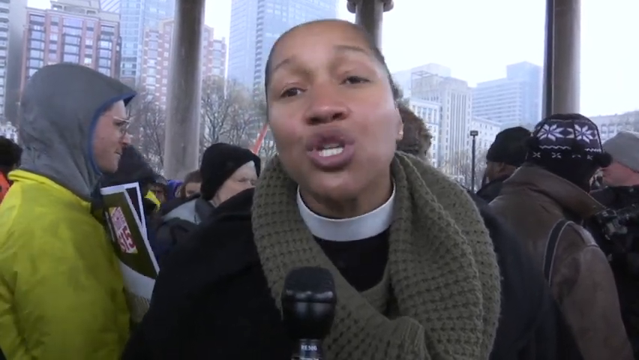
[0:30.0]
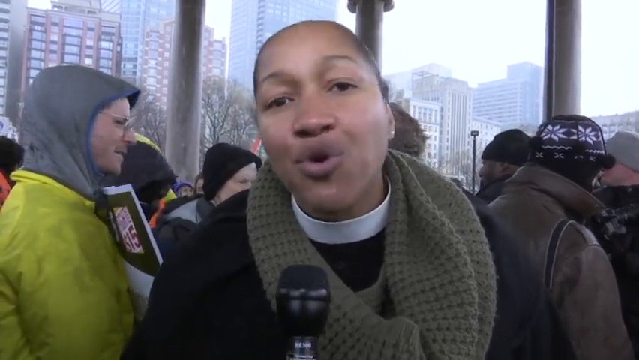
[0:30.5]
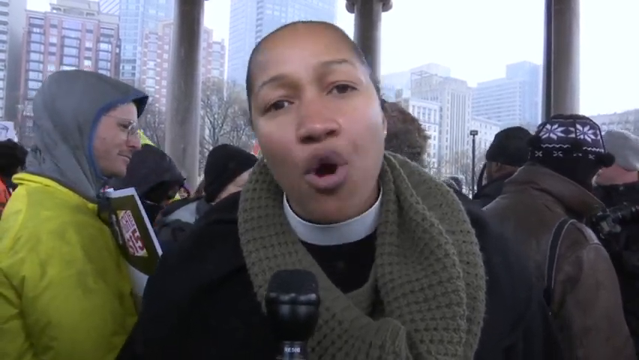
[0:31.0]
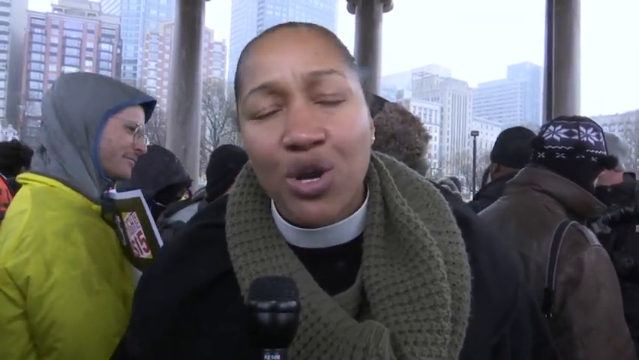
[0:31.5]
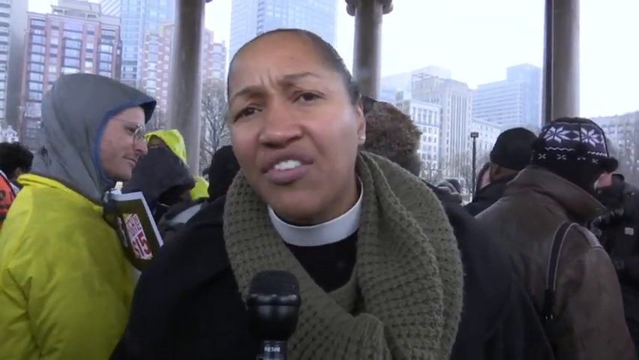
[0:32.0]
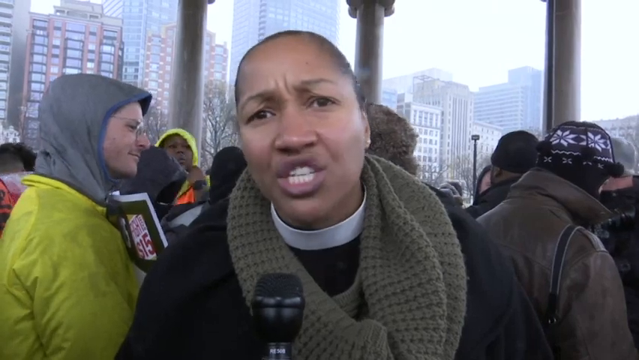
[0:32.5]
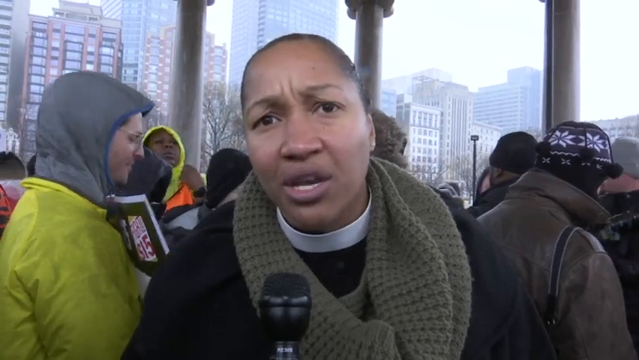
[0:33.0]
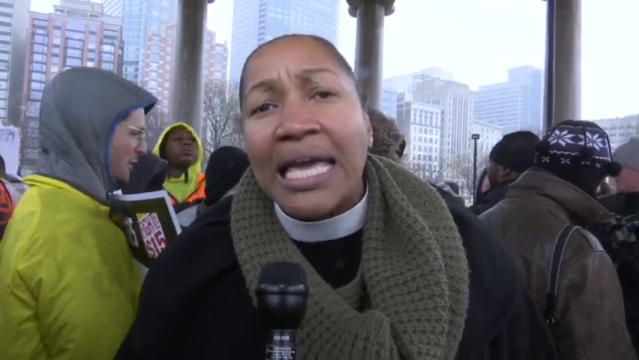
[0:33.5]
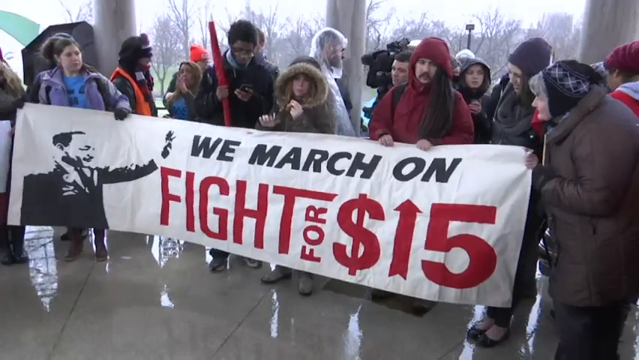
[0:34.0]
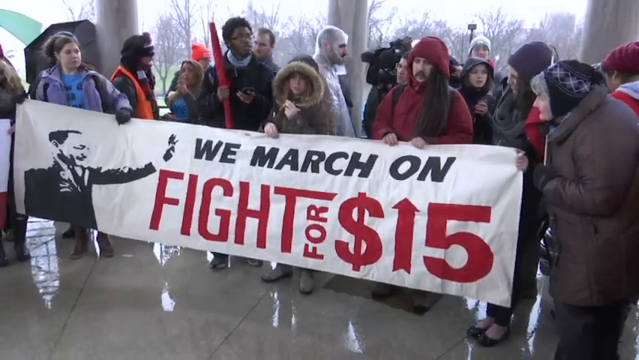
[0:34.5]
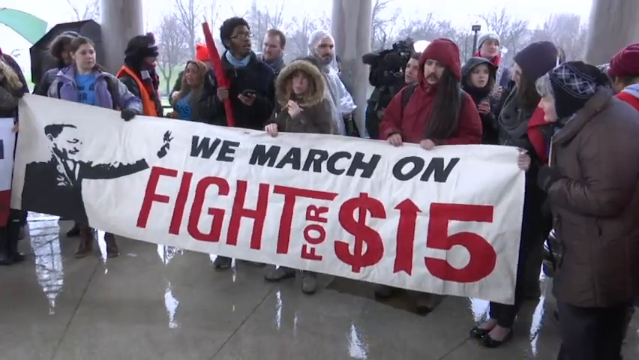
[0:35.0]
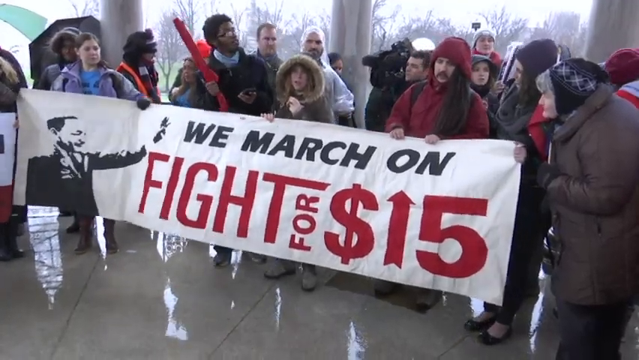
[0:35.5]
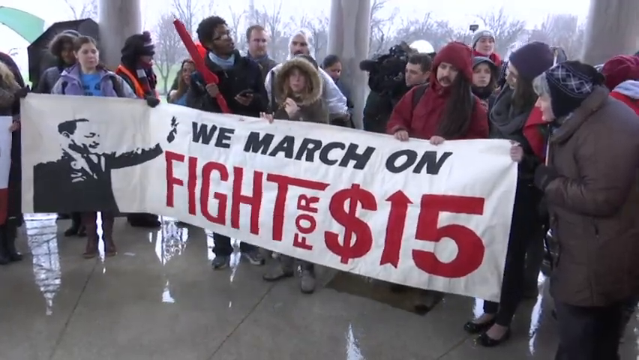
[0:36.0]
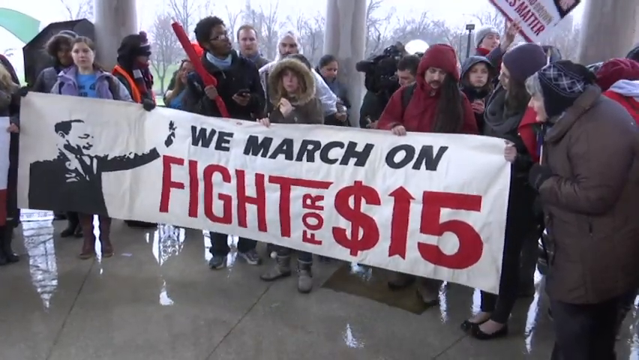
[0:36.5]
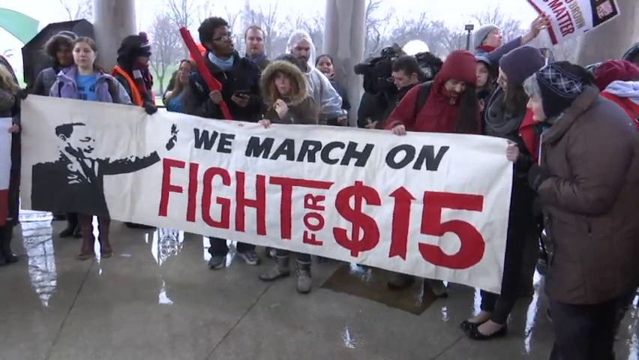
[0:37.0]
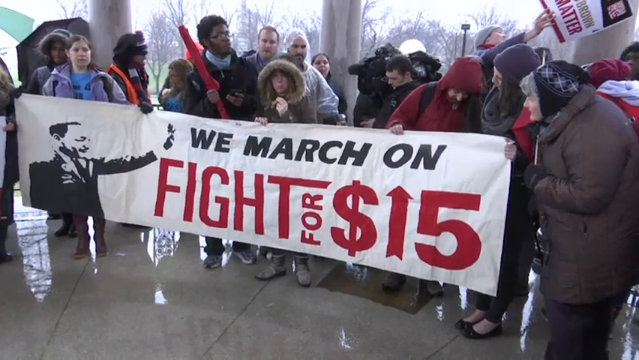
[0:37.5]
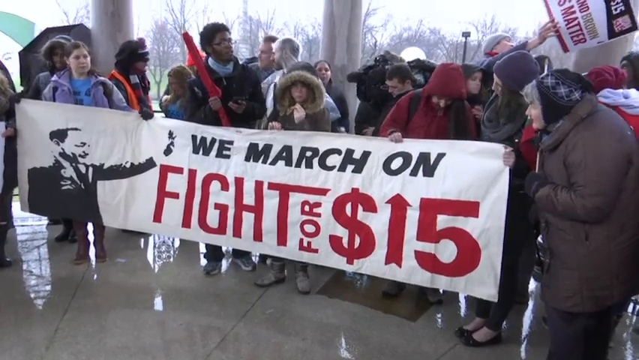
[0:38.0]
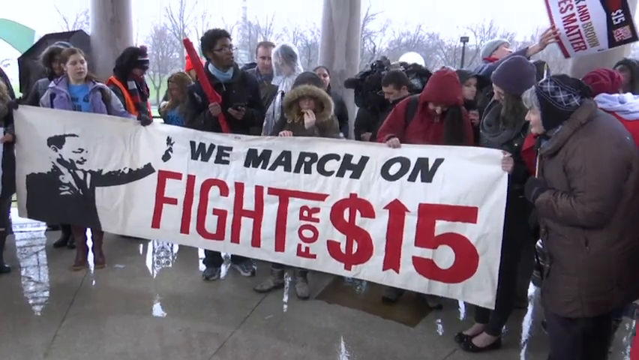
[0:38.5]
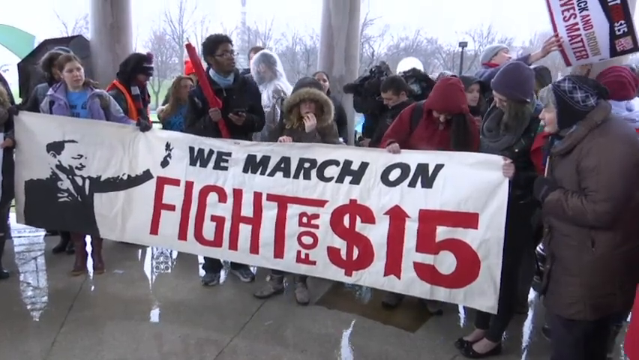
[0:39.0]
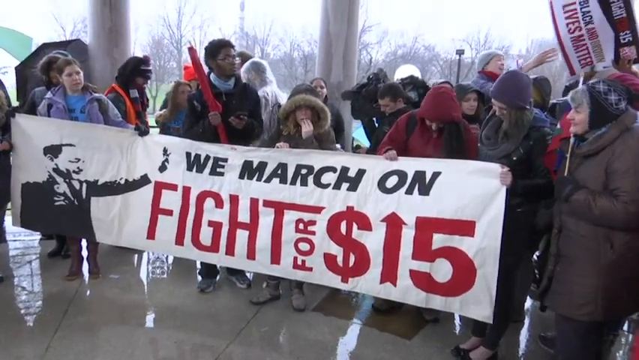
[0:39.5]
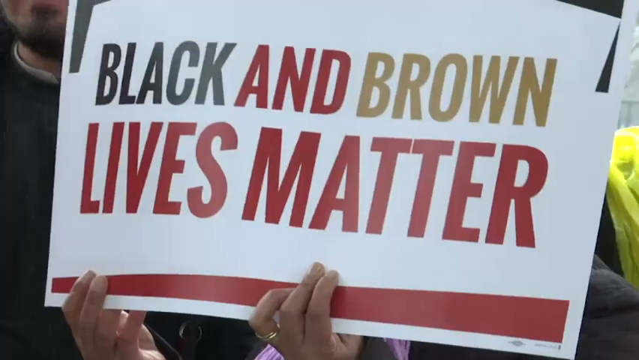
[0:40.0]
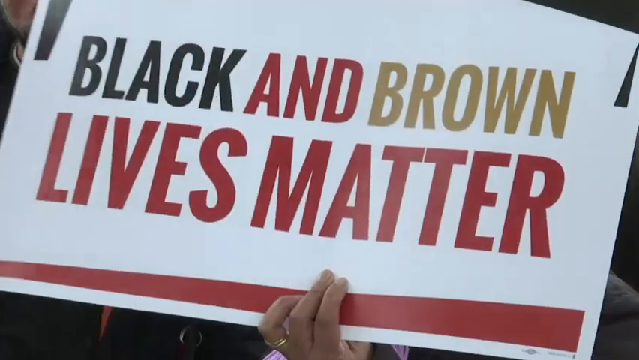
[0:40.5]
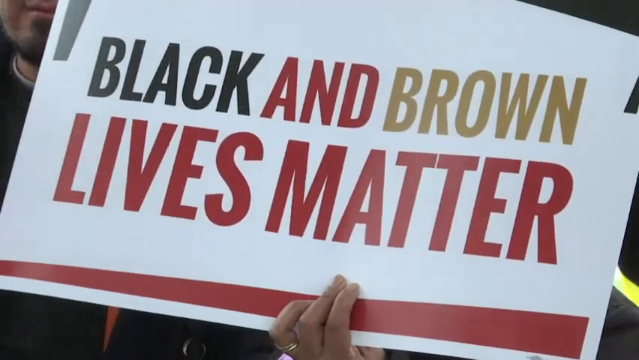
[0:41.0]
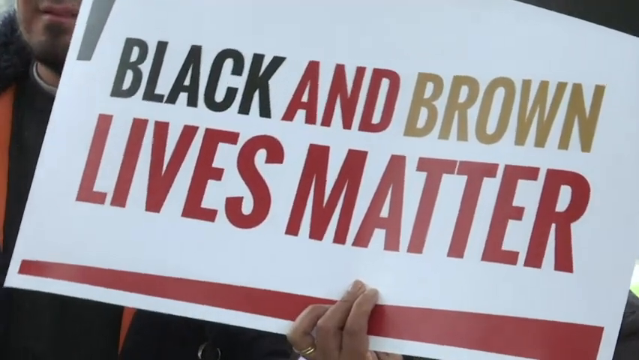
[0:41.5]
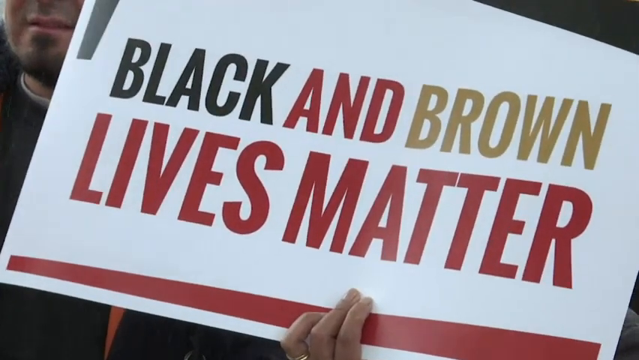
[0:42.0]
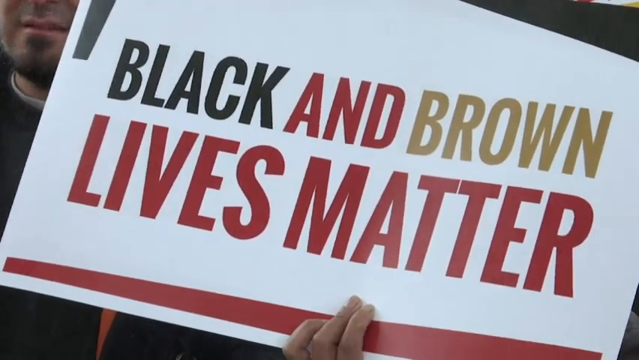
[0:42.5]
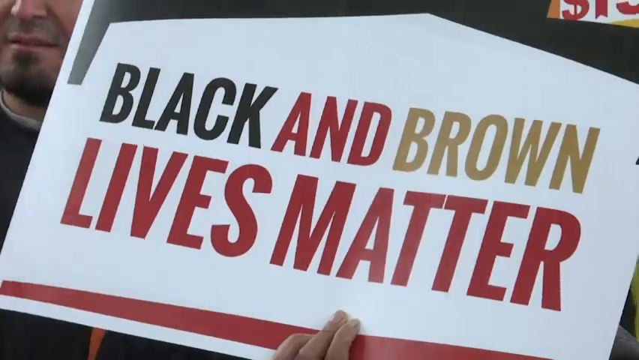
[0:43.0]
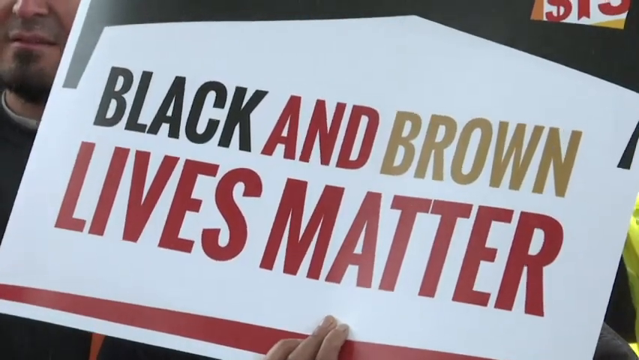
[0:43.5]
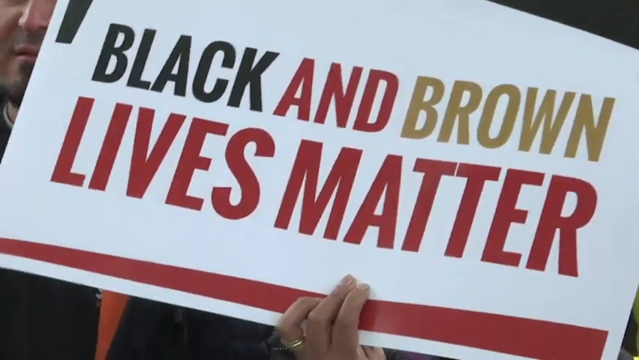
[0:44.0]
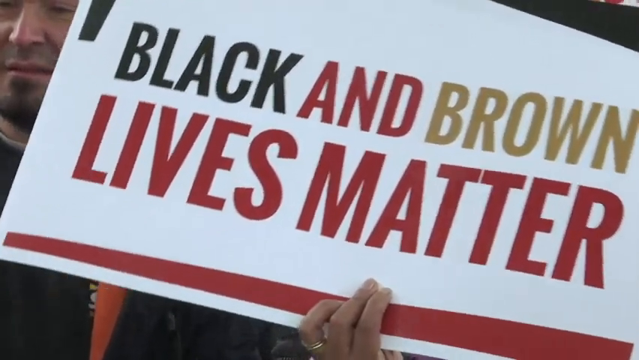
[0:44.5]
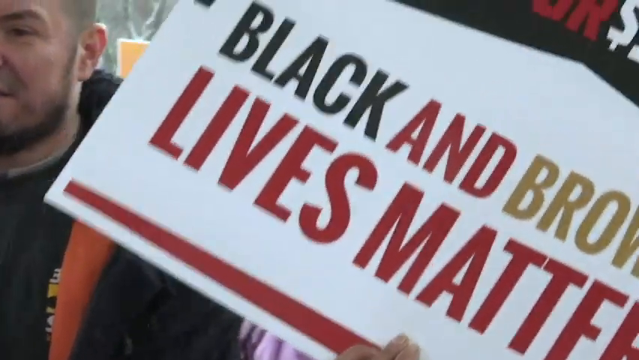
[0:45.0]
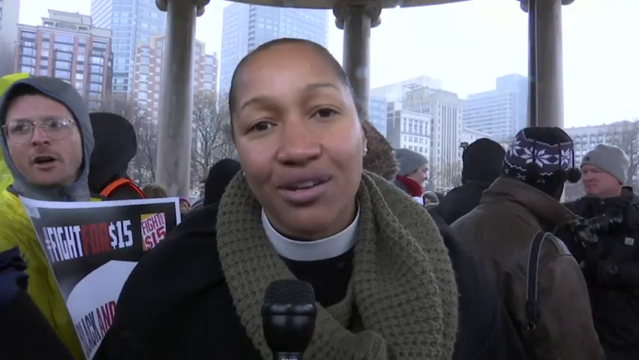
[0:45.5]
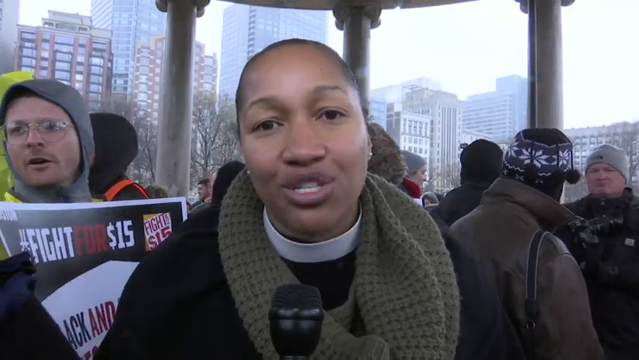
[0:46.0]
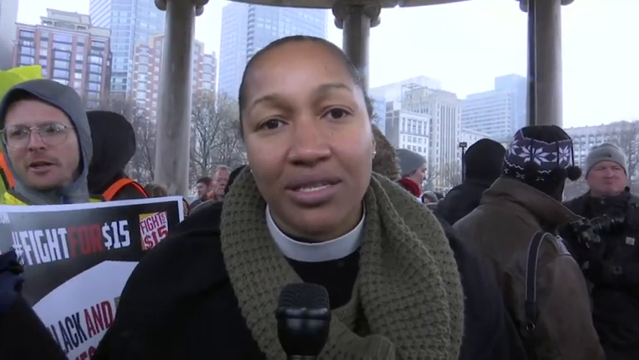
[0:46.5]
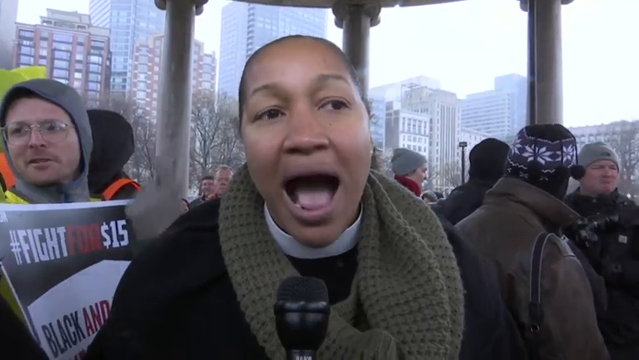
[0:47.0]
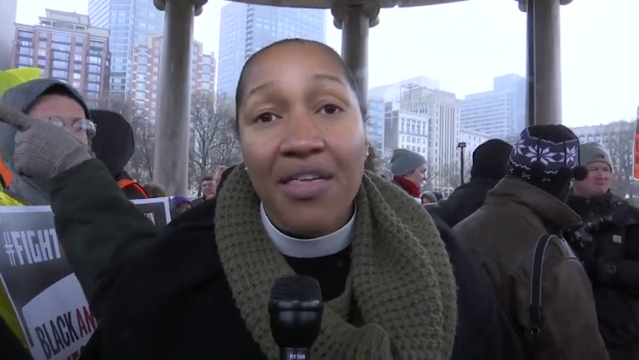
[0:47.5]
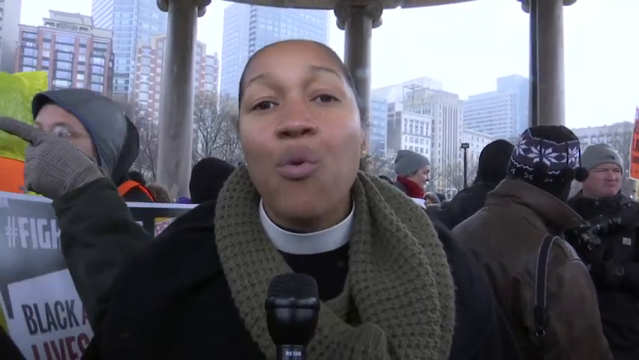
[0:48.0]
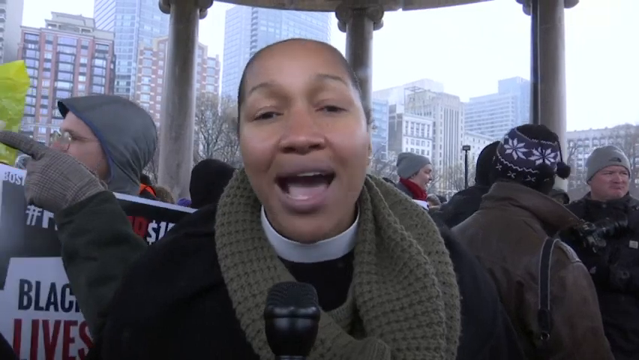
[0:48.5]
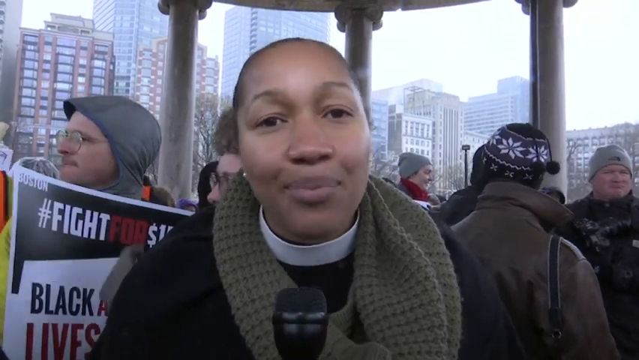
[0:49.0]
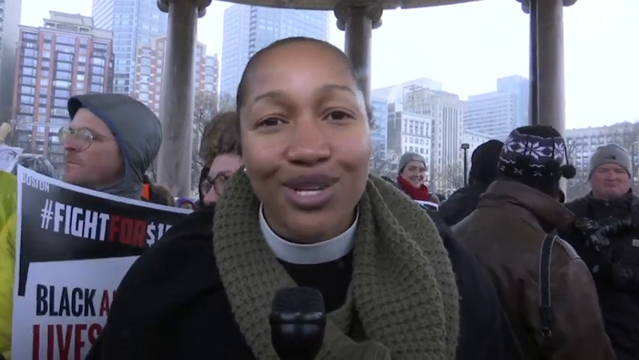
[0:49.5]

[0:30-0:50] The protest is happening at what looks like a Capitol building. The reverend, a civil rights activist, speaks to a reporter while wearing a scarf, and she looks really heated. People around her wear winter attire on the cold day. People hold a banner that reads "we march on, fight for $15", with Martin Luther King Jr. on its left-hand side. Signs read "Black Lives Matter", and "Black and Brown Lives Matter" banners are shown. "#fight for 15" appears on another poster. There are many tall buildings around, but the crowd is huddled under the Capitol building, looking like they are waiting for the rain and storms to pass before continuing to protest. No umbrellas are visible.